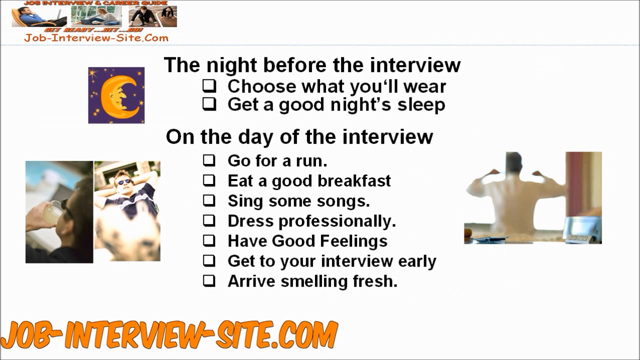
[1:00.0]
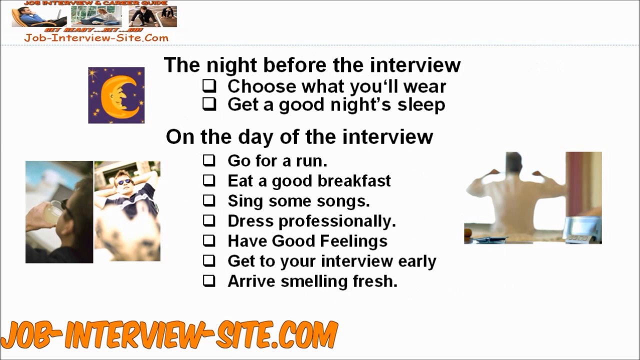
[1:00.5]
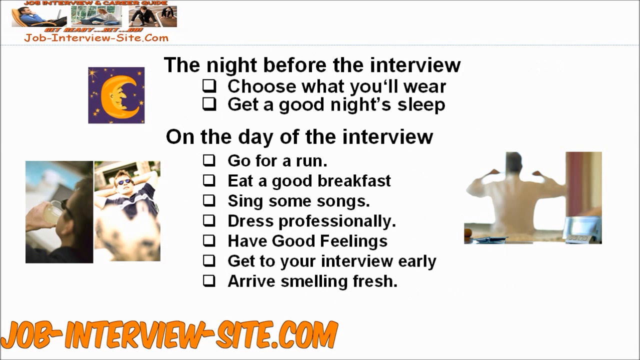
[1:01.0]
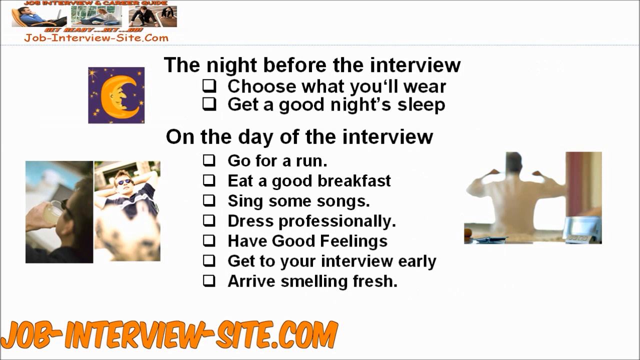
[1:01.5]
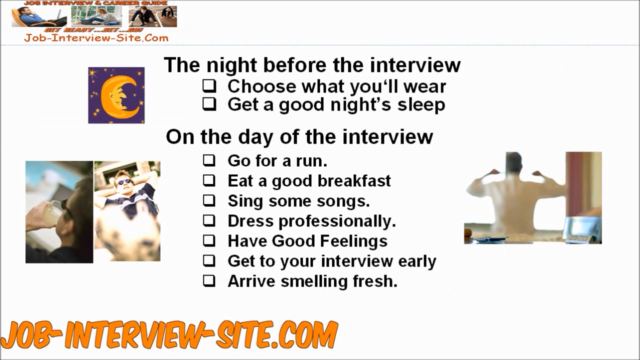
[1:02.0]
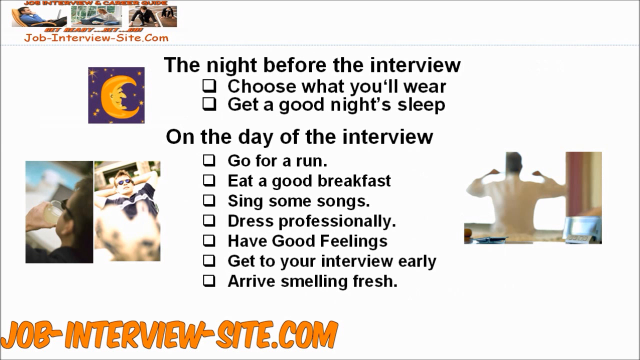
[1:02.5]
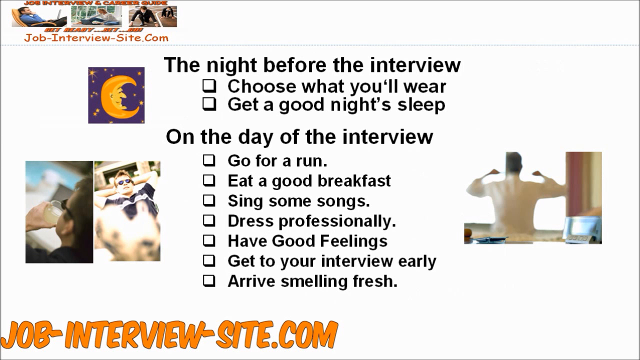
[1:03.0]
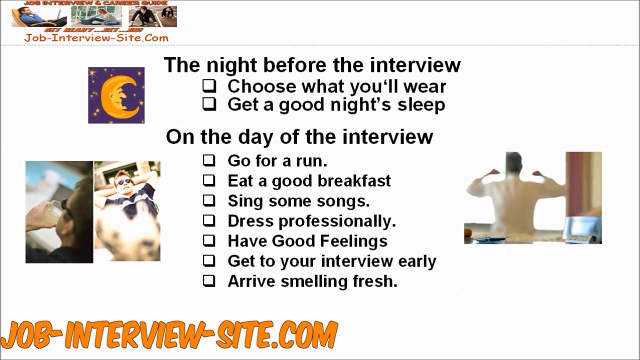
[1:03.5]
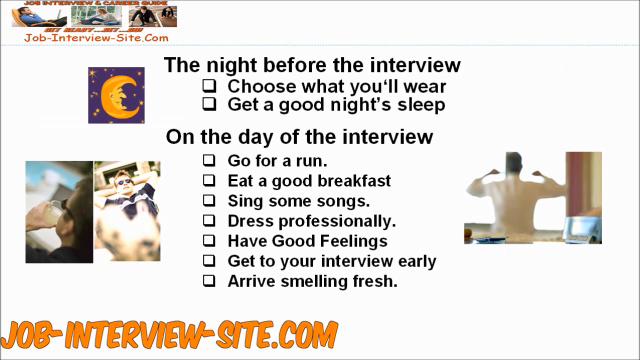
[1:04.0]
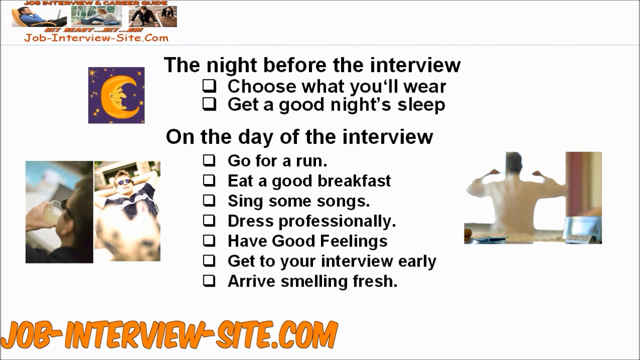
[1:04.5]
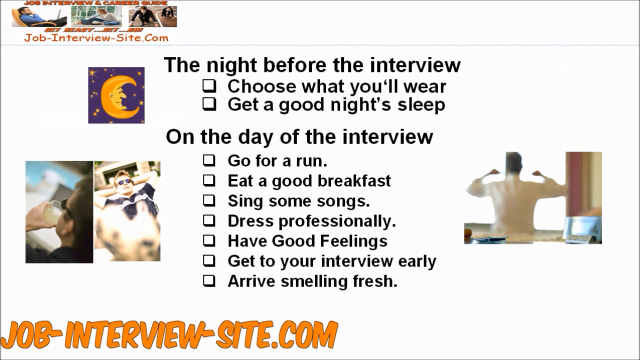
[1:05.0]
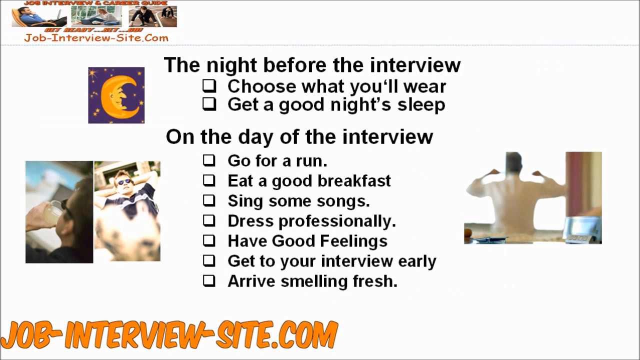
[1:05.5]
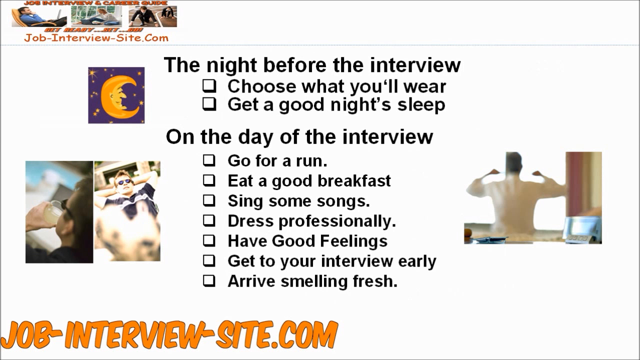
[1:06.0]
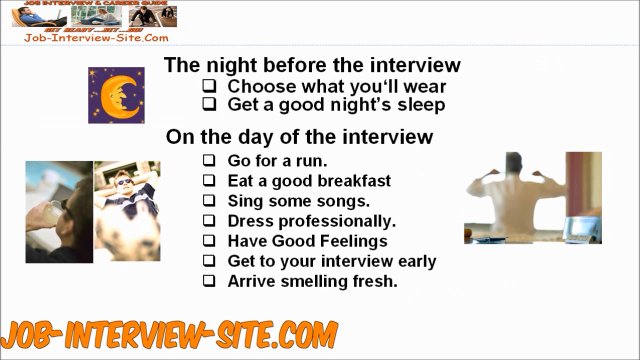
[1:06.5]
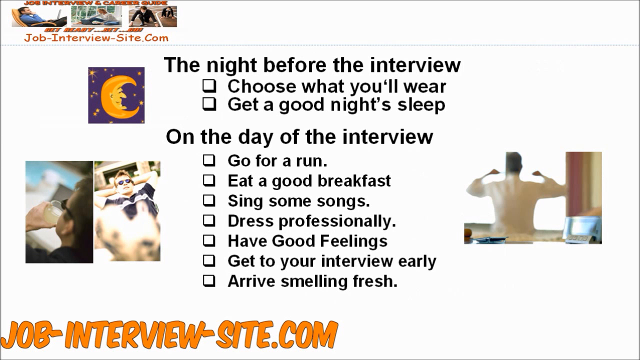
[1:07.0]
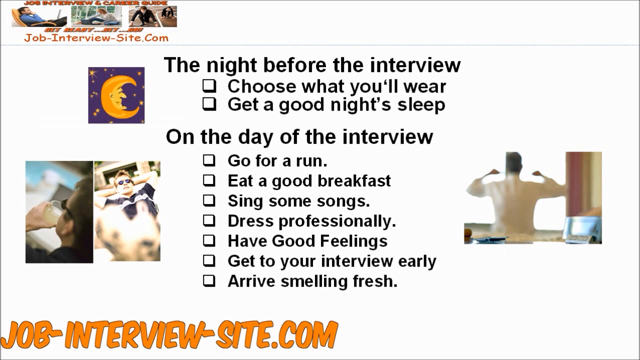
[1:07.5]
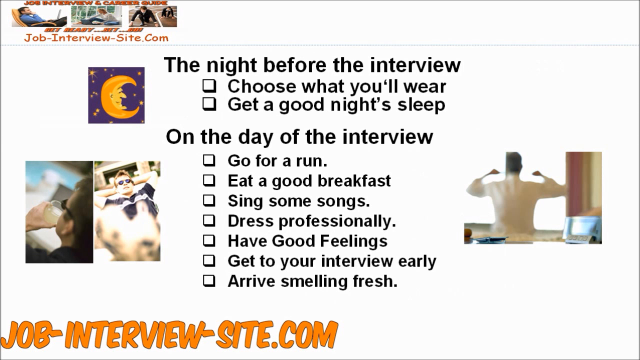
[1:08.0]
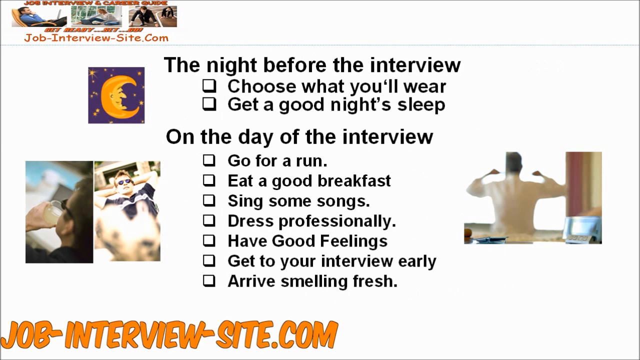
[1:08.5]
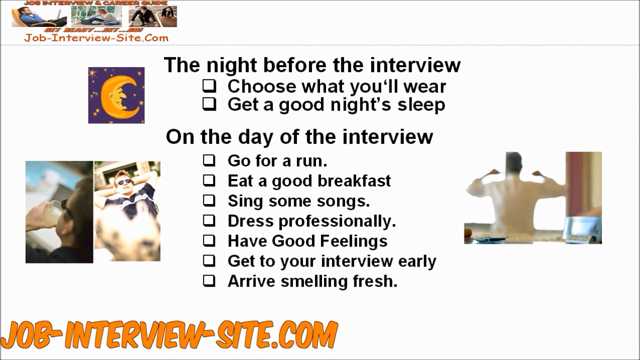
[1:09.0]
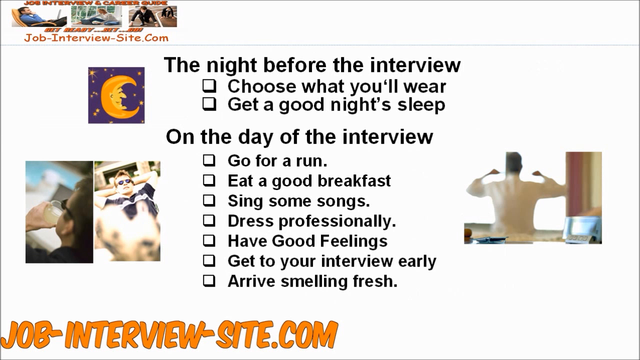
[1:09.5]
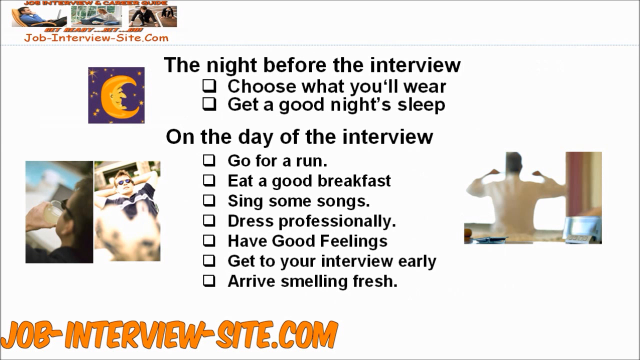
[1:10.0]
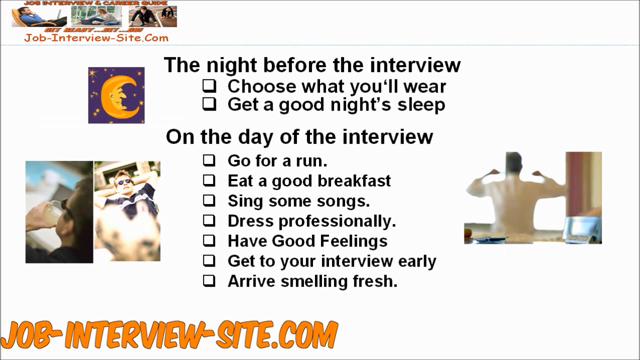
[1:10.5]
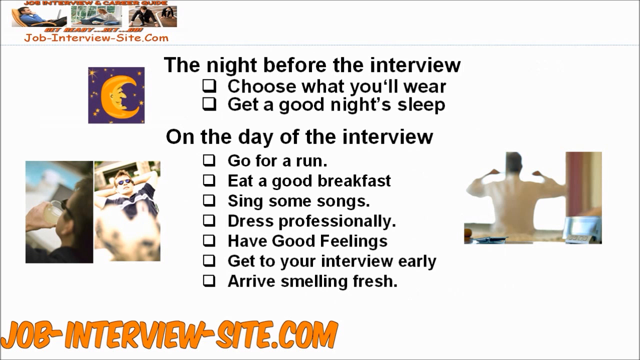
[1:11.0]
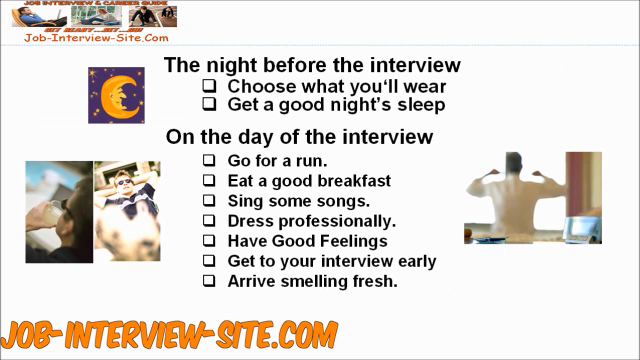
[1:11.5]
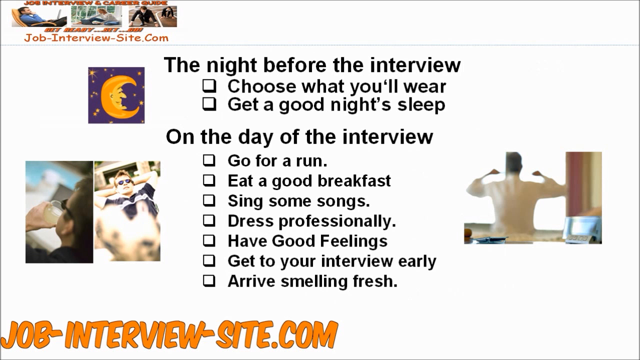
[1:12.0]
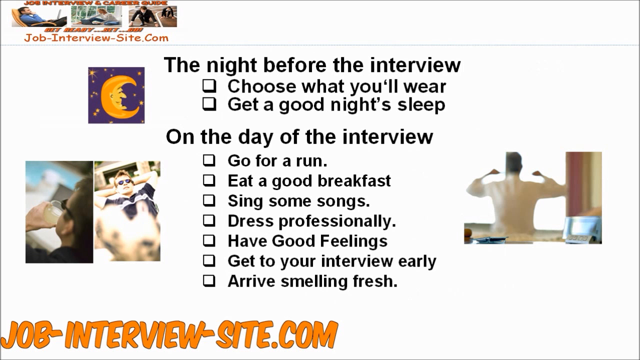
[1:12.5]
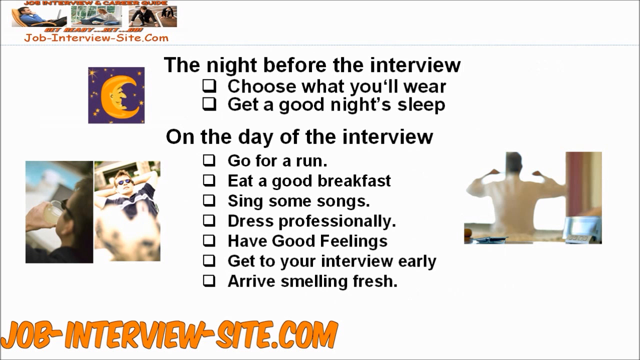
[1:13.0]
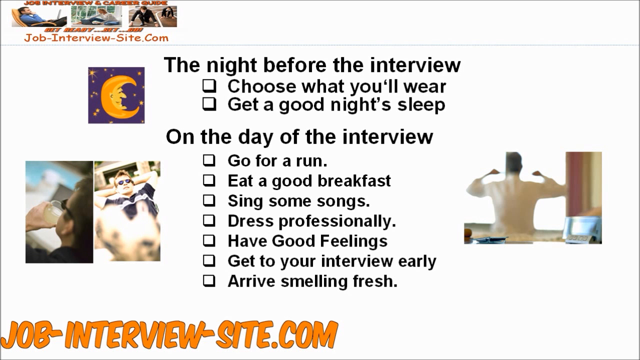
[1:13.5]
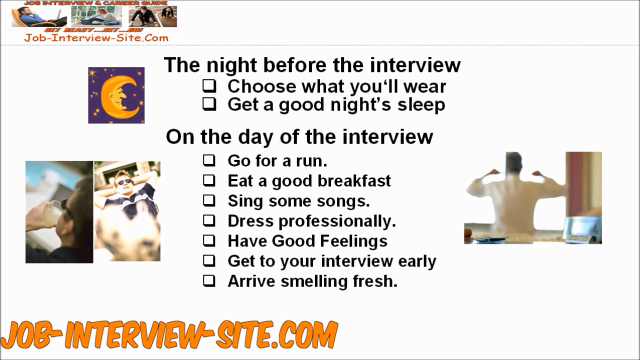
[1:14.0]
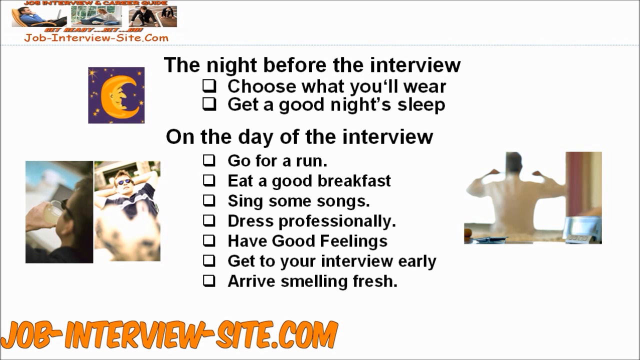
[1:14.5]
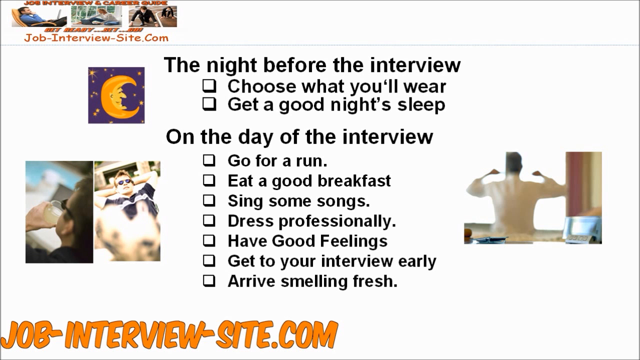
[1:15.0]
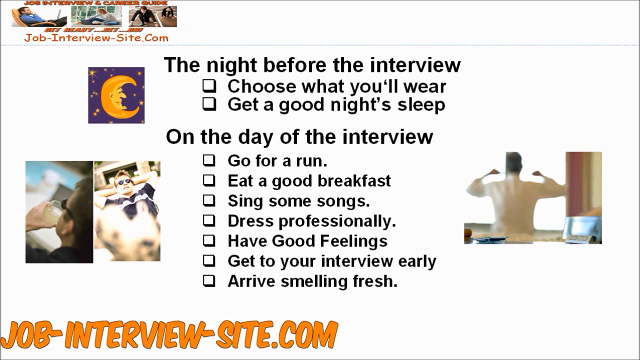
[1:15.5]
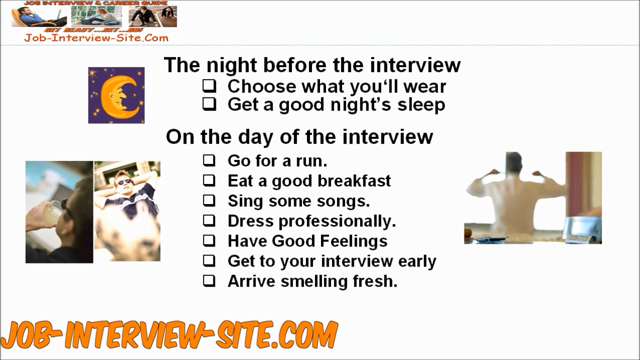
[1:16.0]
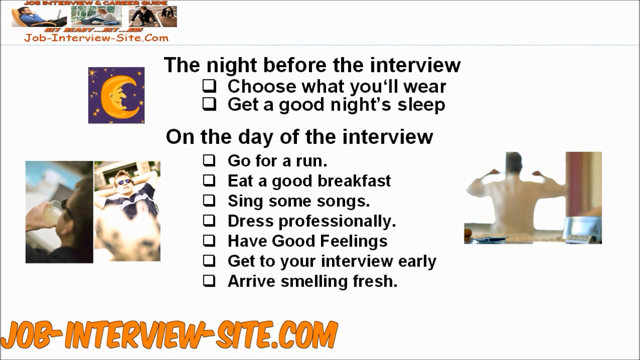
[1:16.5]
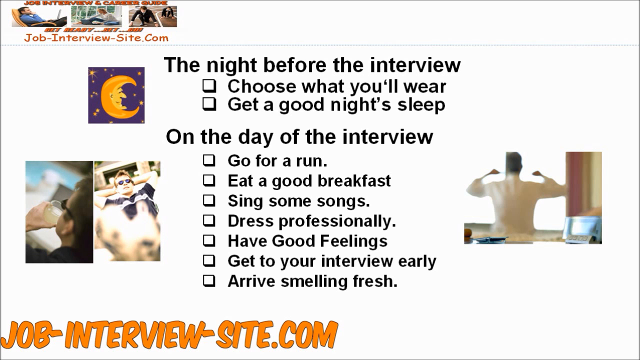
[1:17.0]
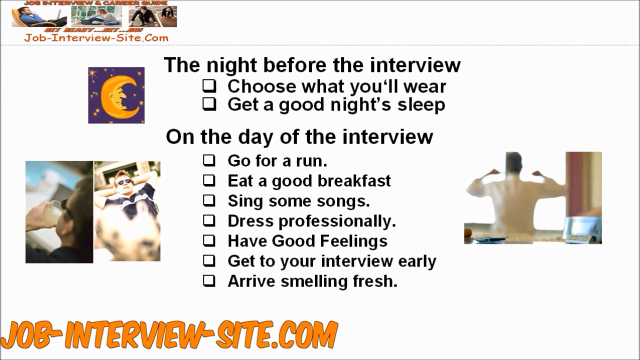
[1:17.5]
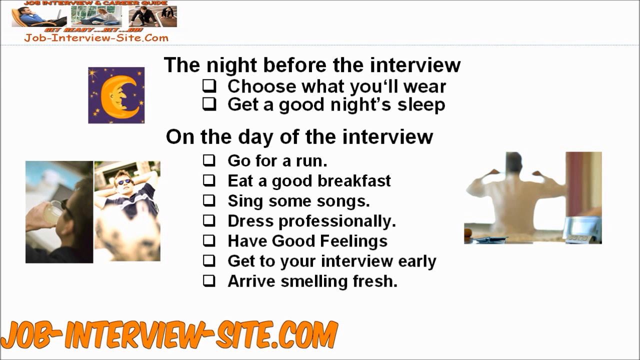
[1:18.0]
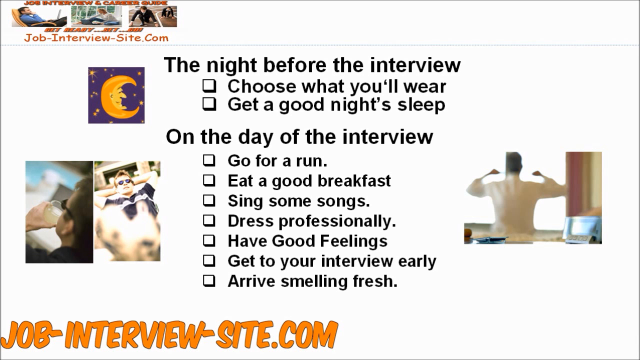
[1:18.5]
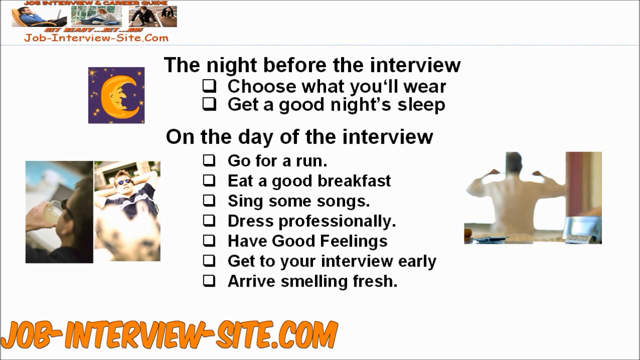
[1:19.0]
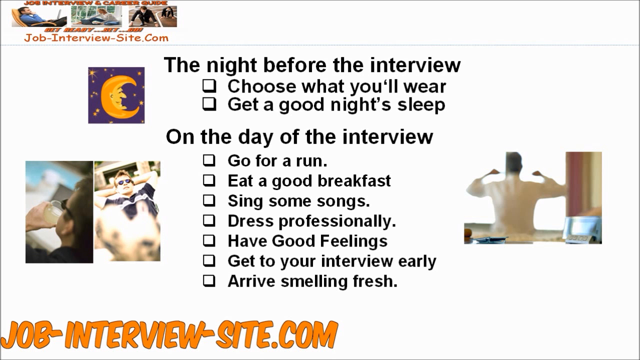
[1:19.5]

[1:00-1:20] At the top of the screen it reads "the night before the interview," with two bullet points: "choose what you'll wear" and "get a good night's sleep." Below that it reads "on the day of the interview," with seven further bullet points: "go for a run," "eat a good breakfast," "sing some songs," "dress professionally," "have good feelings," "get to your interview early," and "arrive smelling fresh." Some of the bullet points end with a full stop and some do not. Images are scattered across the screen. At the top left is a cartoon image of the moon on a blue background with yellow stars; the moon is a crescent with a face with a long nose, shown in side-on profile. At the bottom left, two pictures show a man in sunglasses relaxing: in one he drinks a drink with his left hand, and in the picture to its right he relaxes with both hands behind his head, sort of relaxing in the sunshine. On the right of the screen is a very blurry, out-of-focus image of a man sort of rising up out of a chair or out of bed and sort of stretching his arms, with red curtains and a computer screen visible.